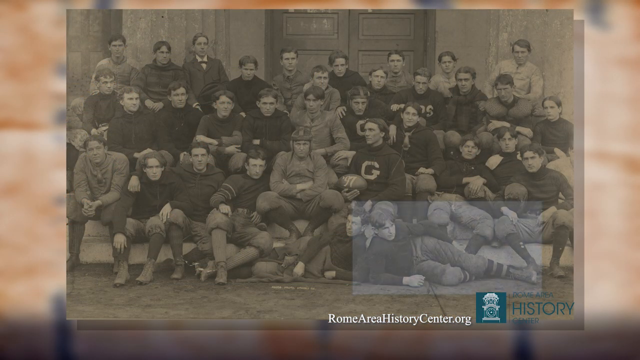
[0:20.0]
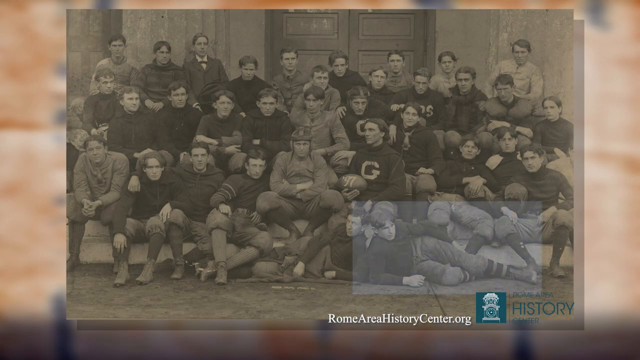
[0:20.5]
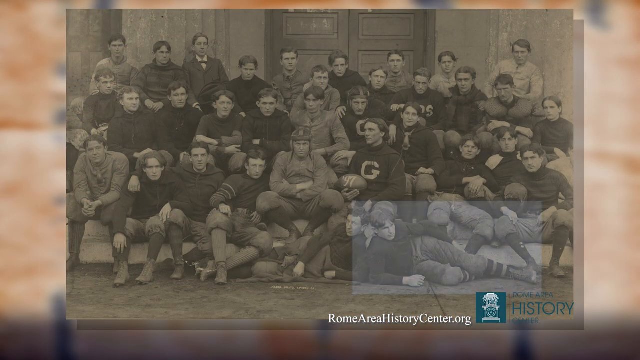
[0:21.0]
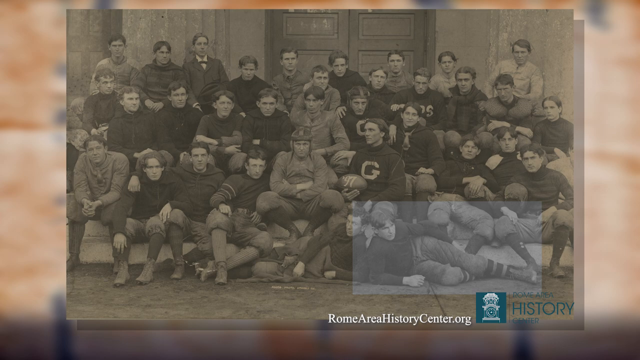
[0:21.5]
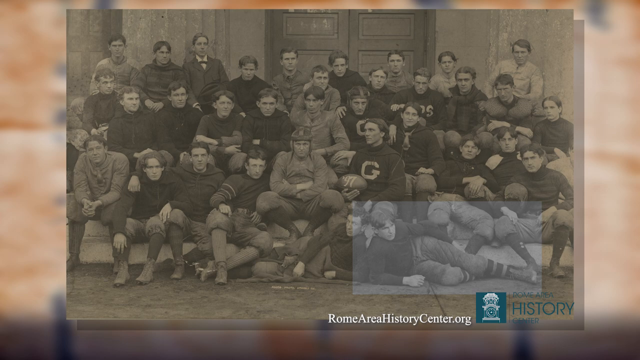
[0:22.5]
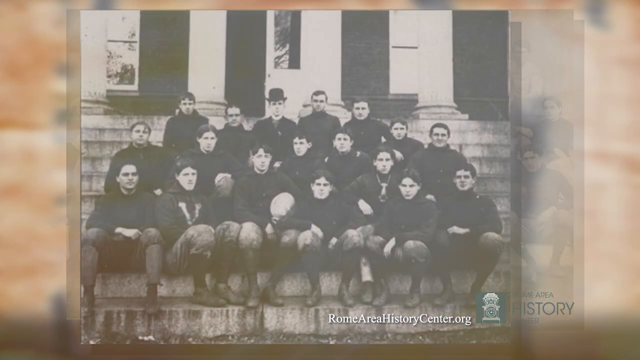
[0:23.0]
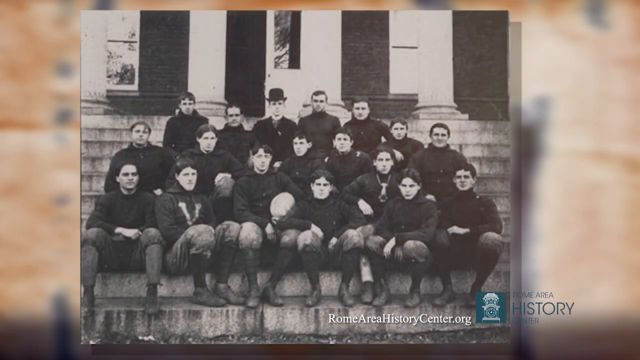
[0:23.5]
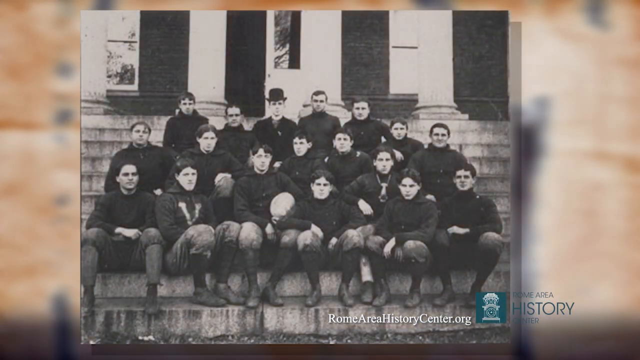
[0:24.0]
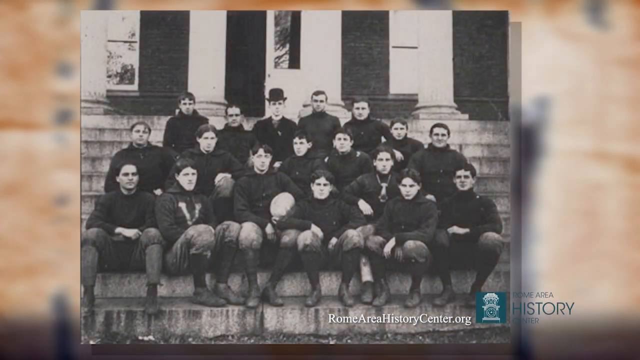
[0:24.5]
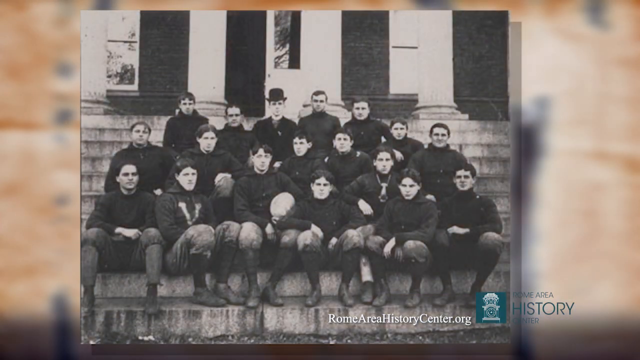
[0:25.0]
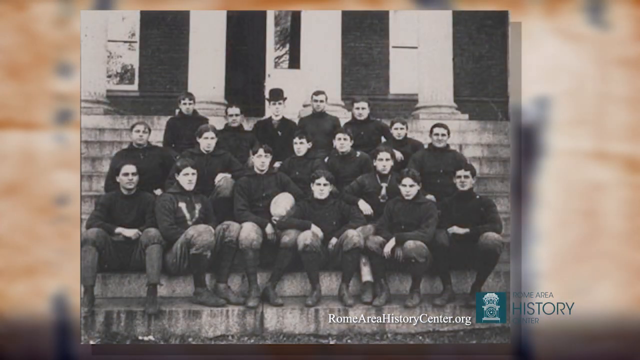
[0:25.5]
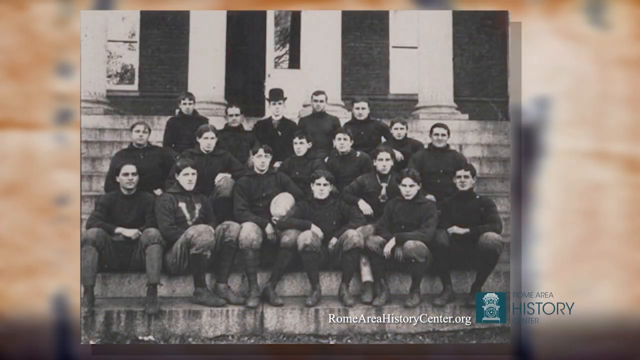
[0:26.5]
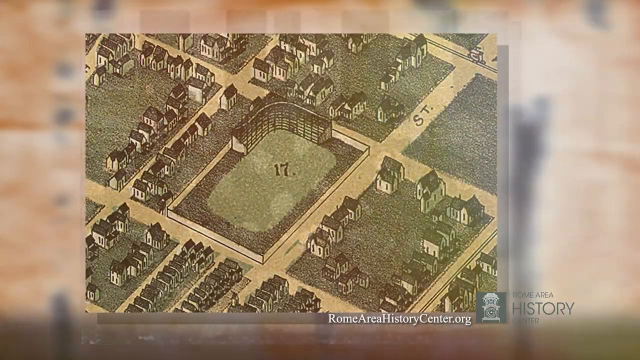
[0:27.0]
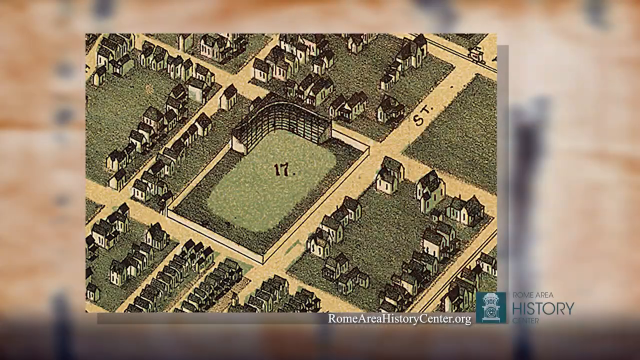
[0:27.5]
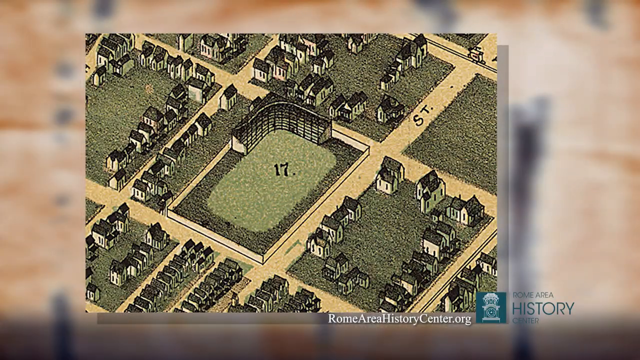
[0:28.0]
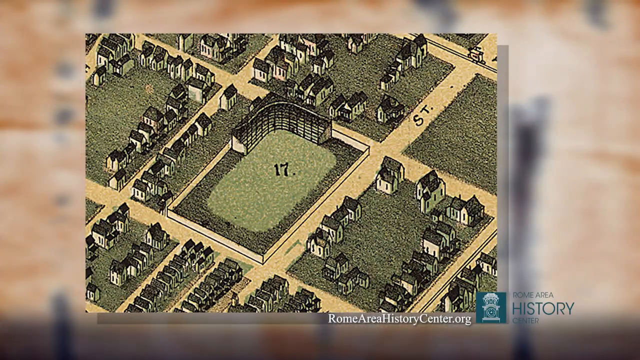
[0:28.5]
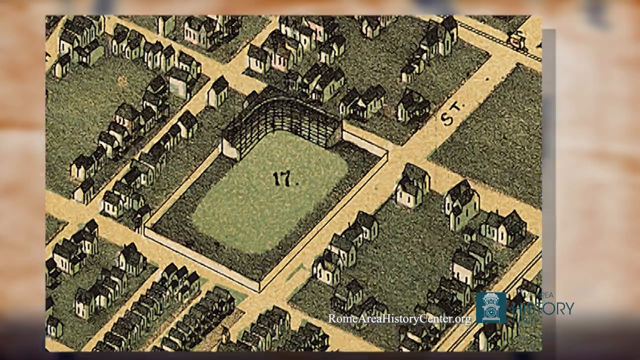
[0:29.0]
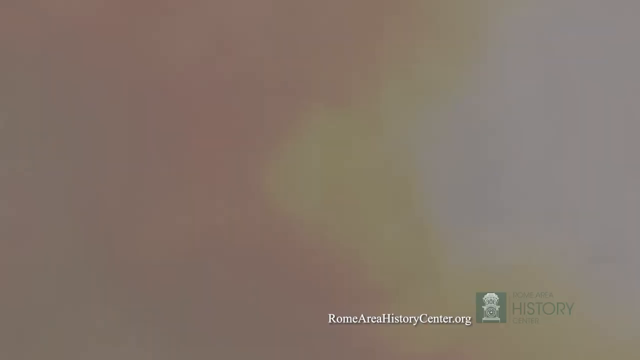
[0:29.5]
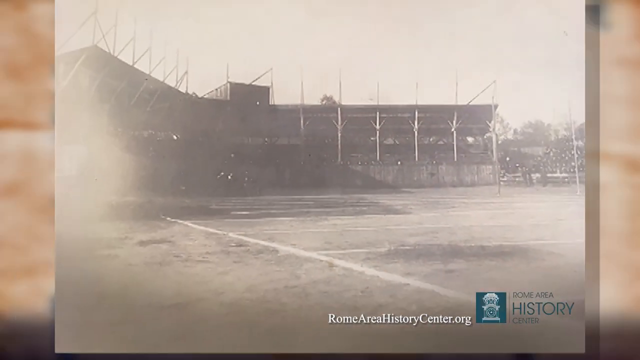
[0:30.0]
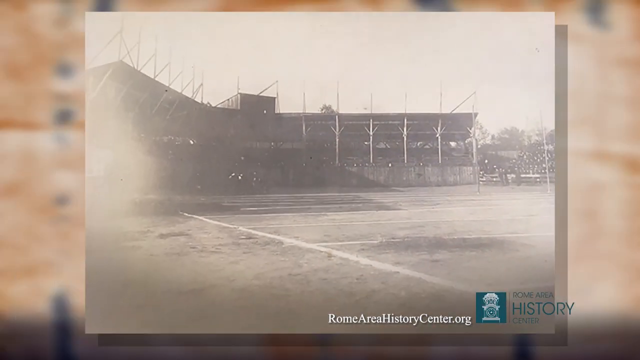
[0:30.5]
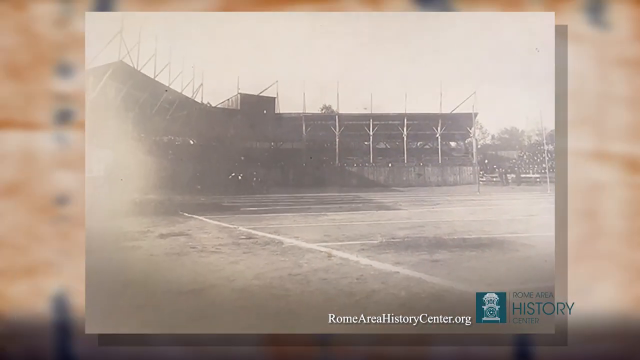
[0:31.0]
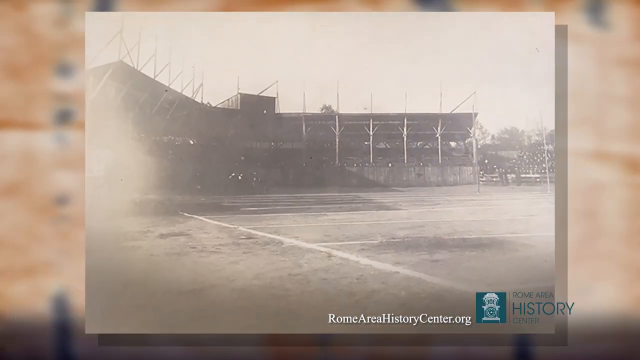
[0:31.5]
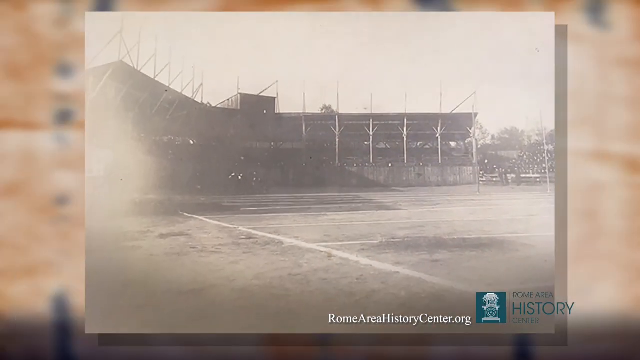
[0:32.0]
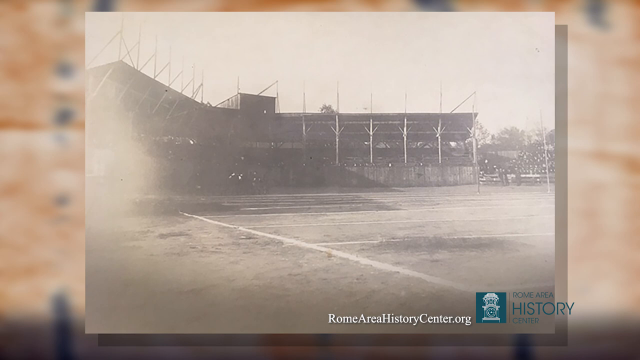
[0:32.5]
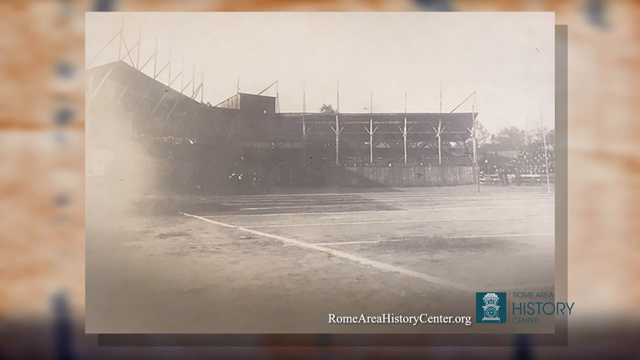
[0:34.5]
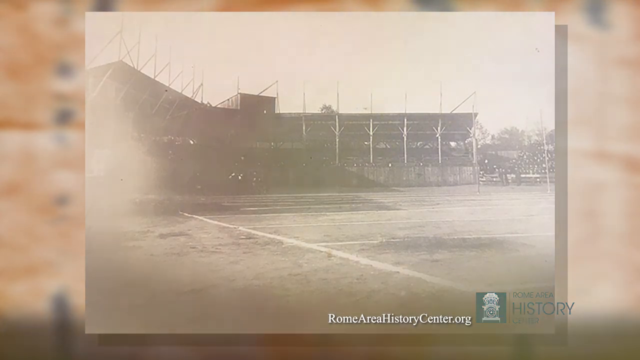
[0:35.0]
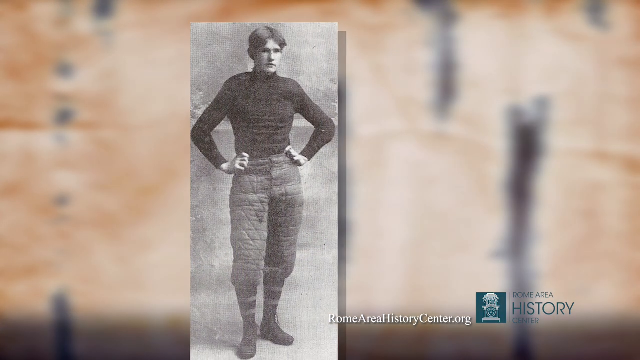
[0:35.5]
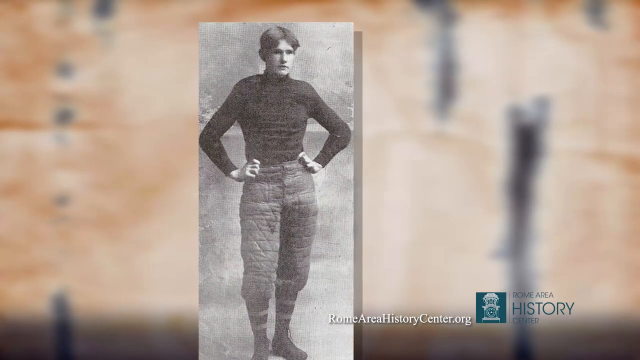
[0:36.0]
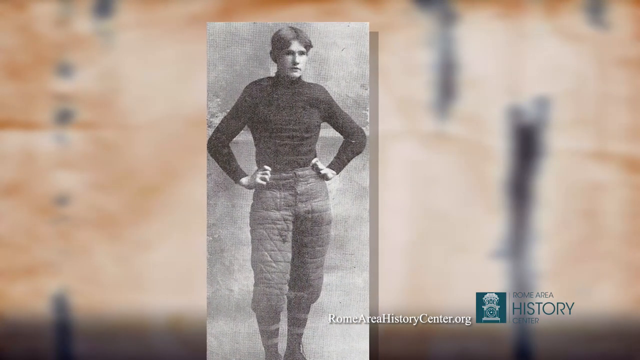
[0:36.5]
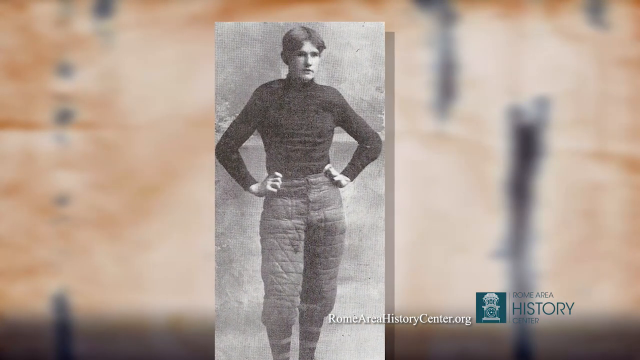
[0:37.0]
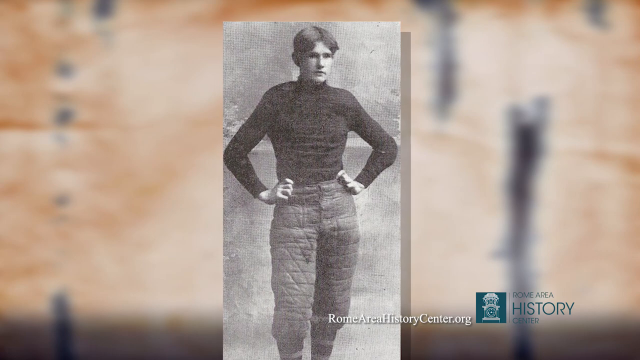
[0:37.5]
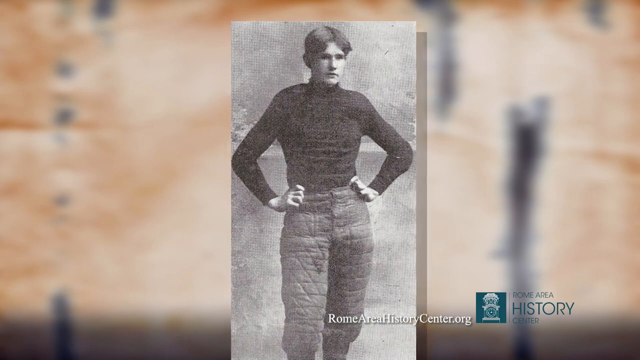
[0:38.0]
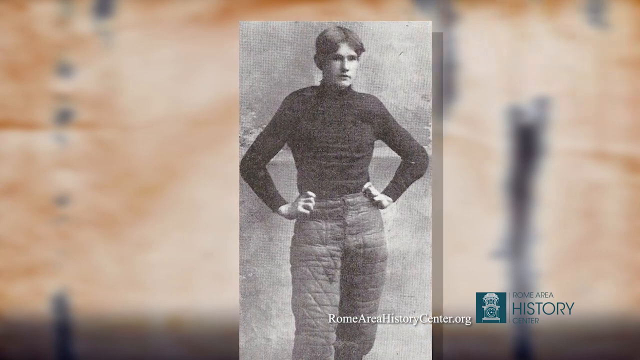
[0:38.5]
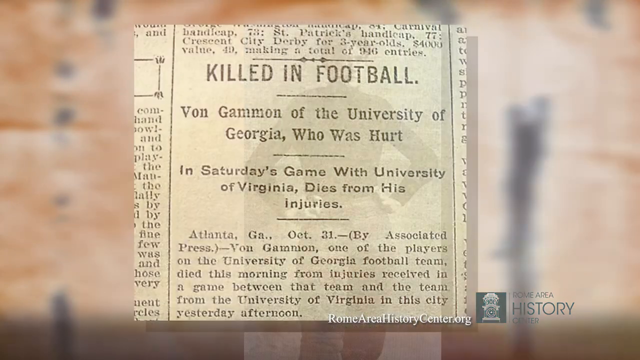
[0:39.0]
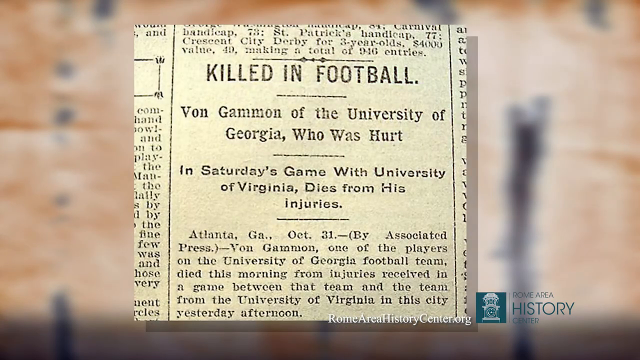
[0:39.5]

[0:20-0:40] The pictures of the men in rugby outfits continue. One of them holds what looks like a rugby ball while the rest are posing, some with their arms crossed as they look at the camera, and they almost all have the same hairstyle. The video then cuts to another black-and-white image of what looks to be a rugby team, a group of boys or young men posing, with one in the center holding a ball while the rest sit on steps; a man at the back wears a suit and a top hat. Next is an illustration of what looks to be a sports stadium with the number 17 in its center. Around it are neighborhoods, houses and streets running through the area, and the stadium itself is rectangular, with a section for seating in its top left corner. Then an actual black-and-white image of the stadium shows what appear to be stands and a bit of the field, though the resolution is very poor and hard to make out. The camera then cuts to an image of a boy in a long-sleeve top with what look like rugby pants, striped socks and shoes, and the camera zooms into the image. A newspaper clipping appears for just a second.